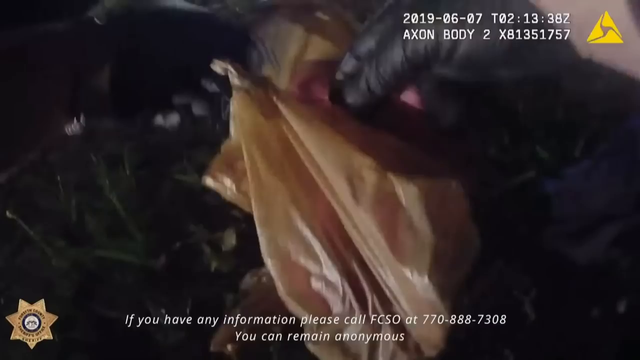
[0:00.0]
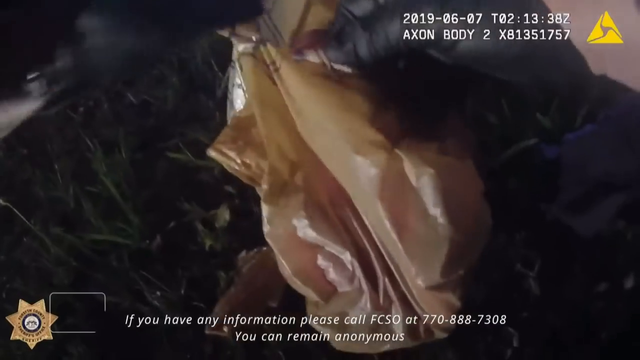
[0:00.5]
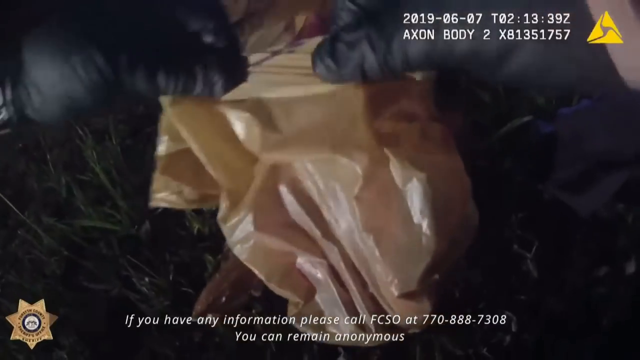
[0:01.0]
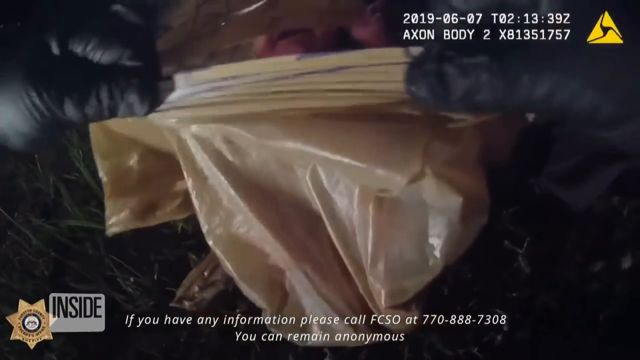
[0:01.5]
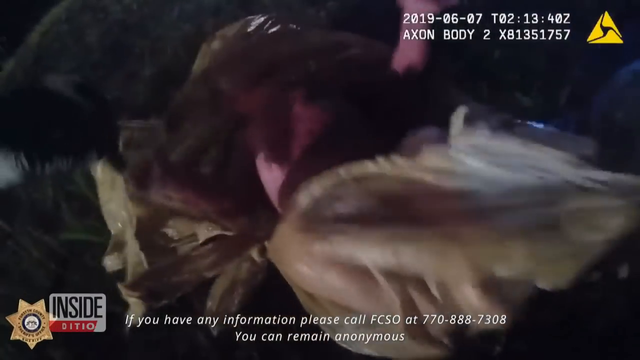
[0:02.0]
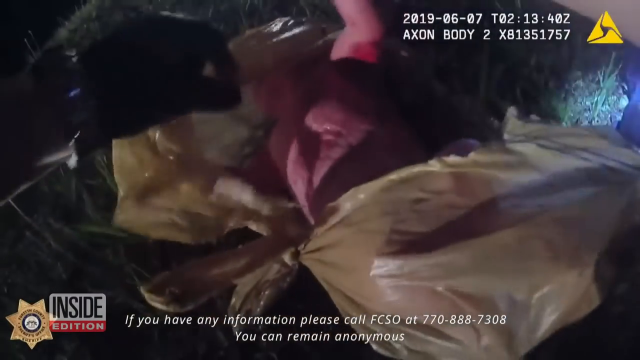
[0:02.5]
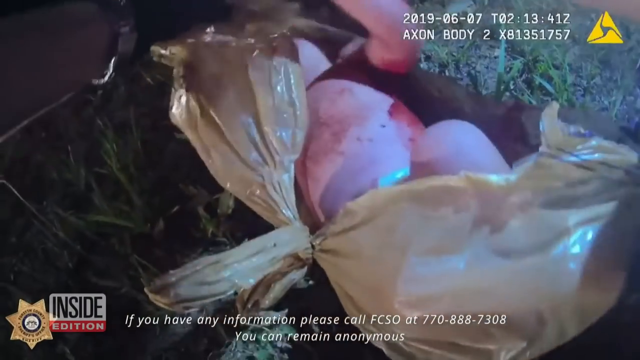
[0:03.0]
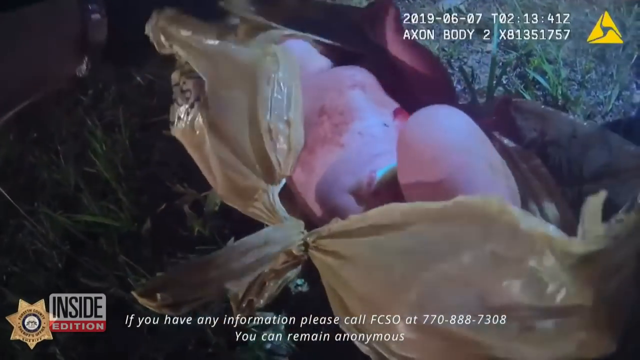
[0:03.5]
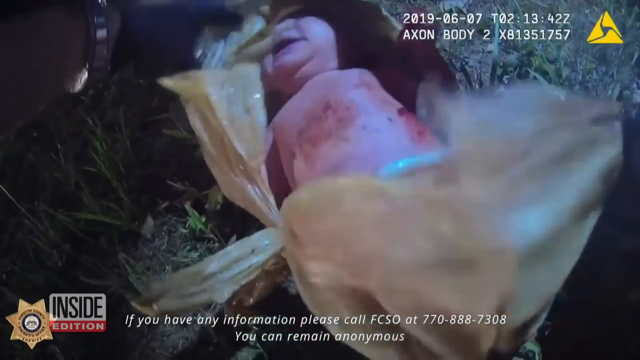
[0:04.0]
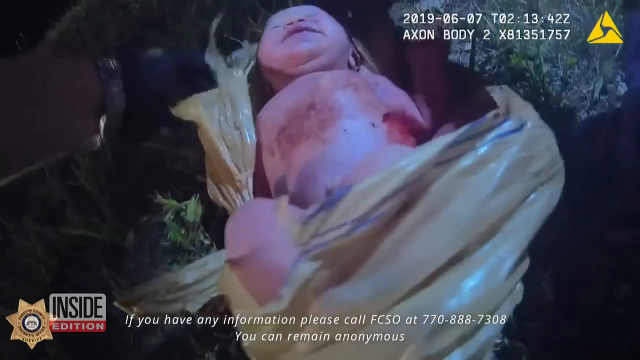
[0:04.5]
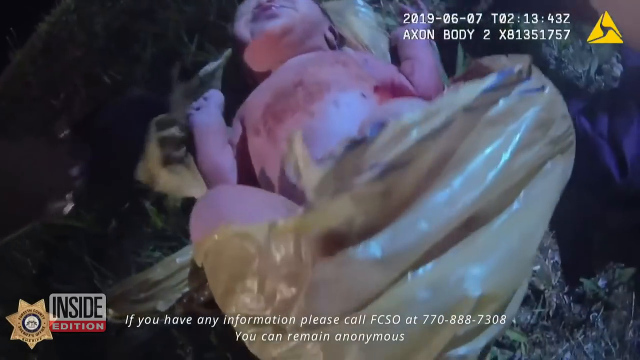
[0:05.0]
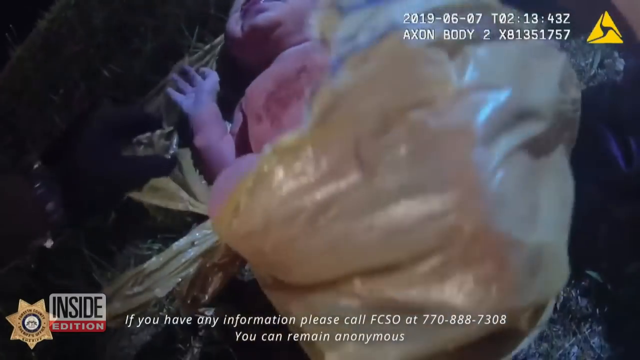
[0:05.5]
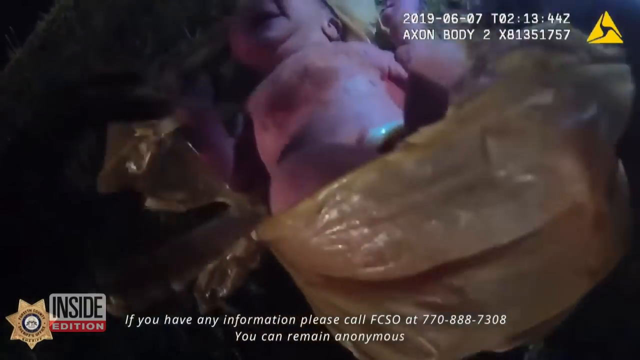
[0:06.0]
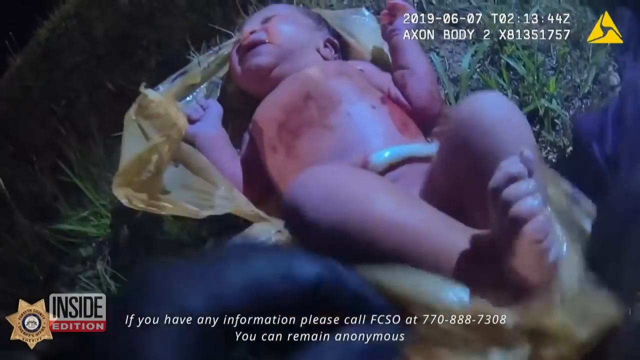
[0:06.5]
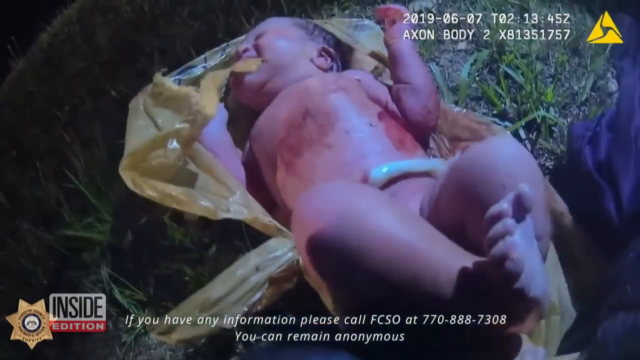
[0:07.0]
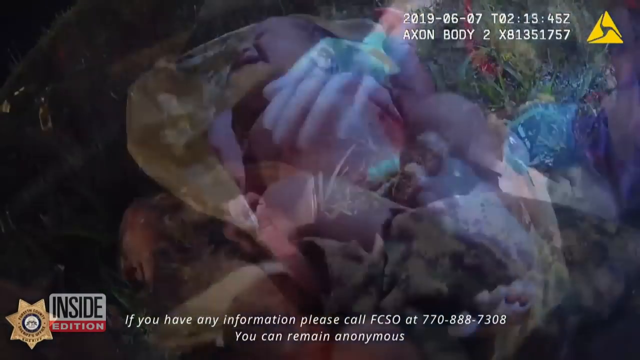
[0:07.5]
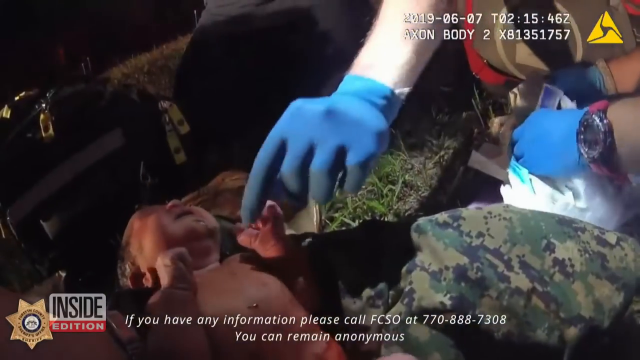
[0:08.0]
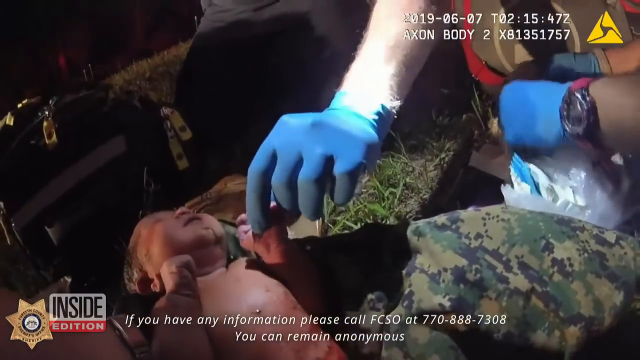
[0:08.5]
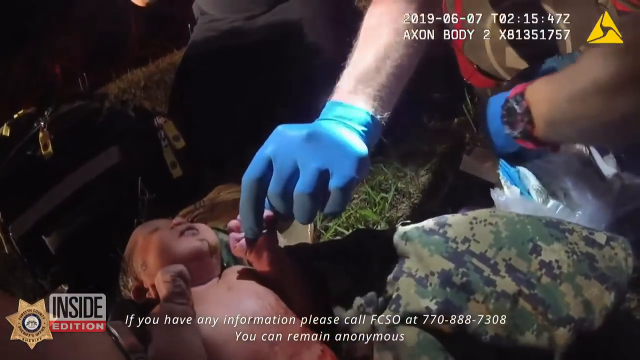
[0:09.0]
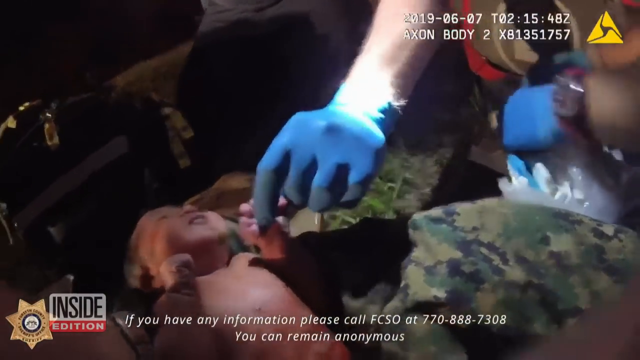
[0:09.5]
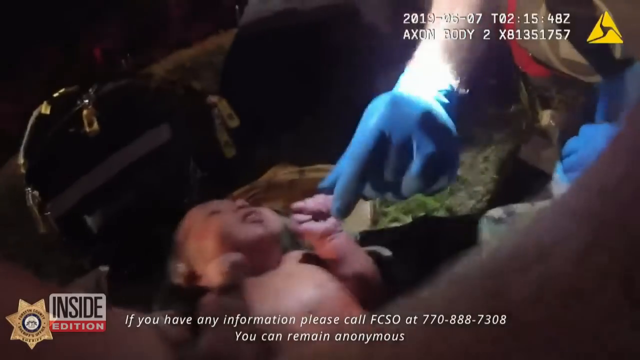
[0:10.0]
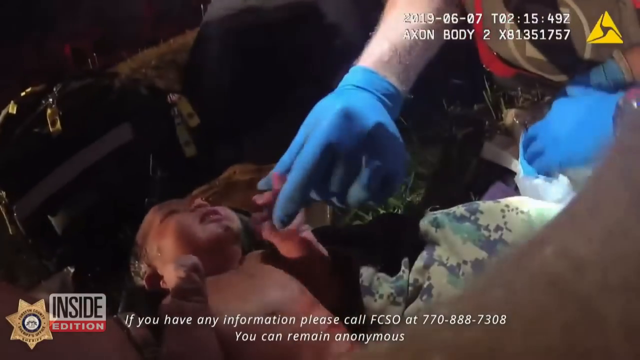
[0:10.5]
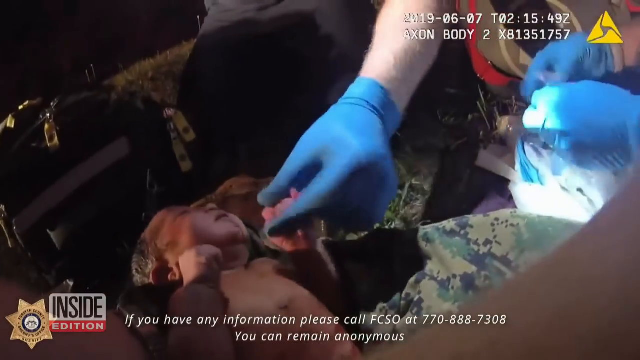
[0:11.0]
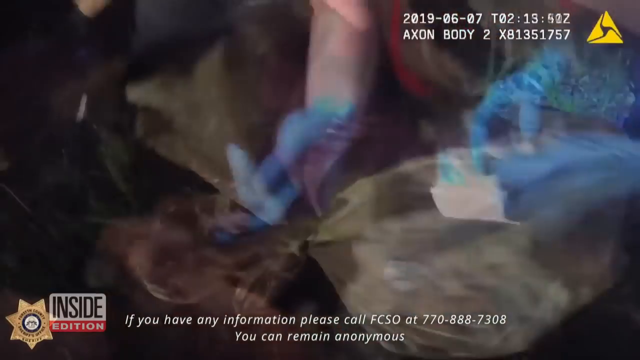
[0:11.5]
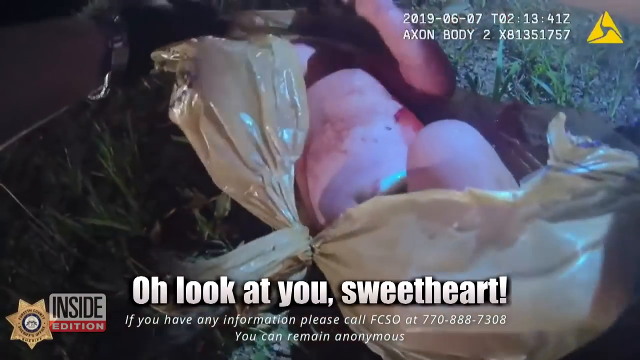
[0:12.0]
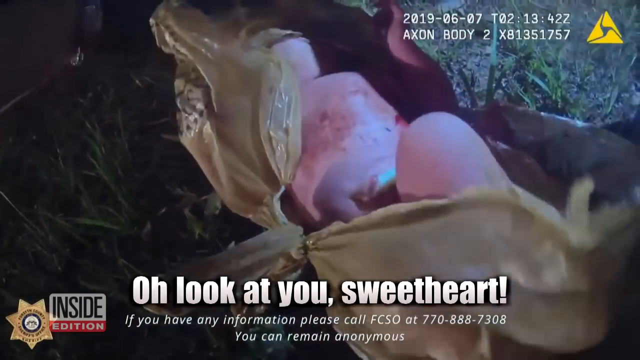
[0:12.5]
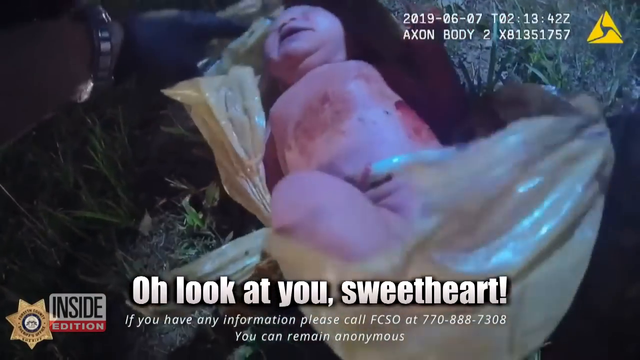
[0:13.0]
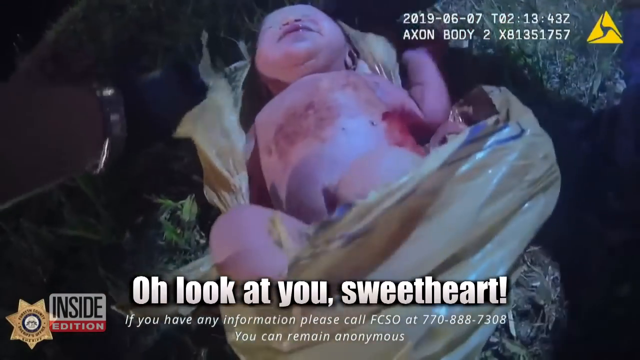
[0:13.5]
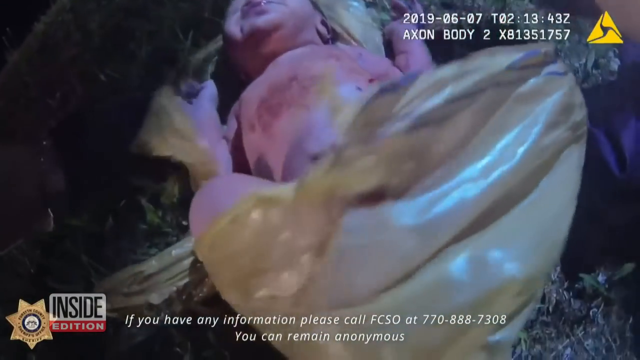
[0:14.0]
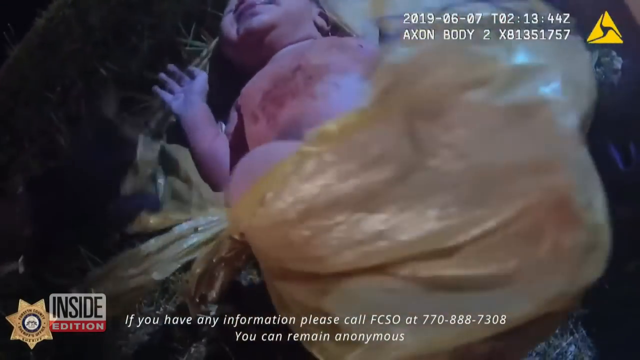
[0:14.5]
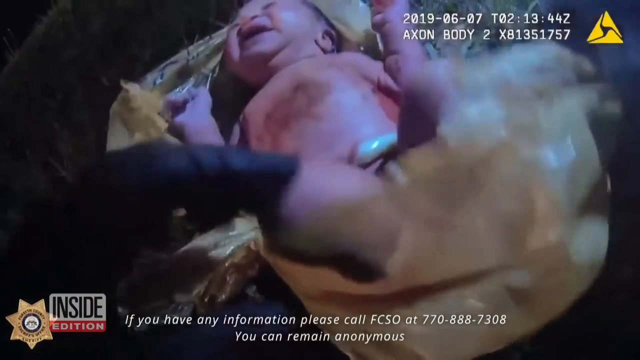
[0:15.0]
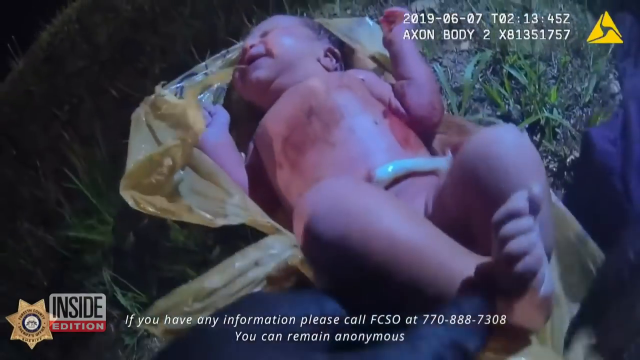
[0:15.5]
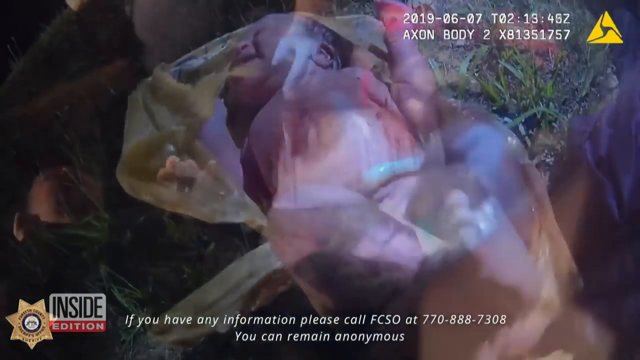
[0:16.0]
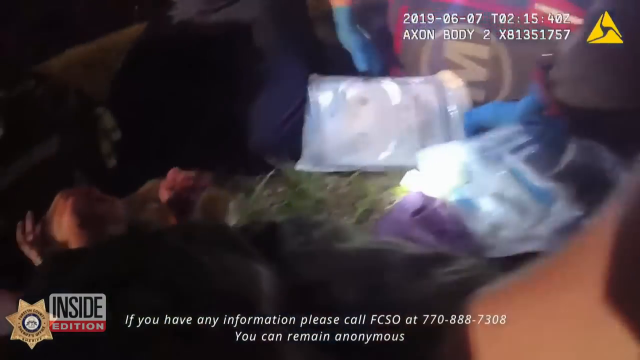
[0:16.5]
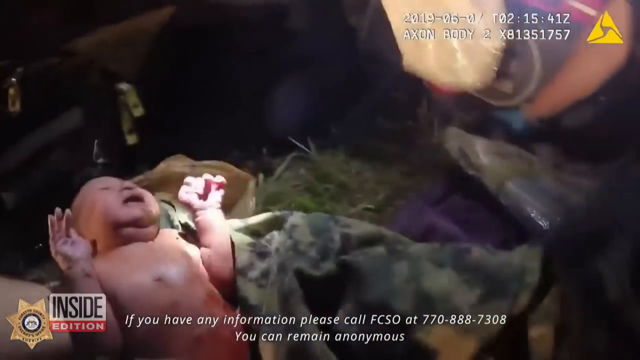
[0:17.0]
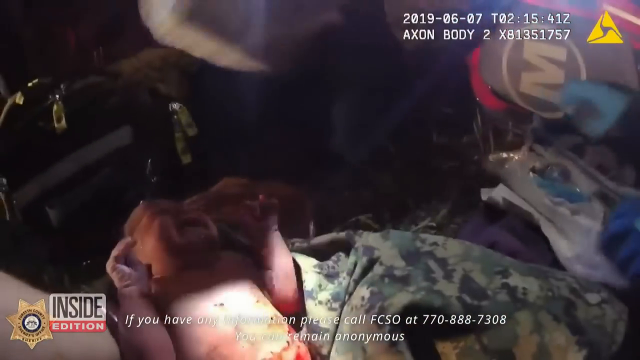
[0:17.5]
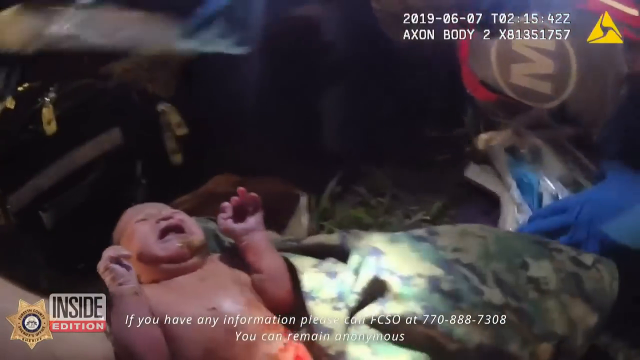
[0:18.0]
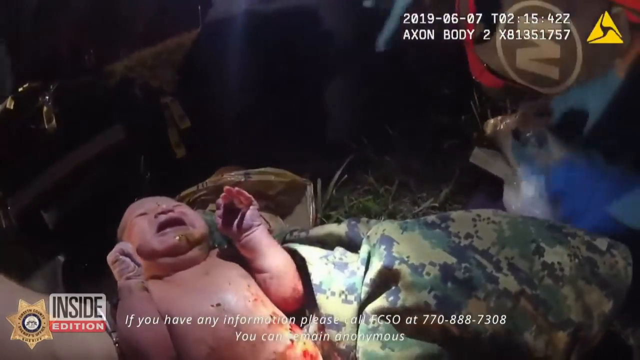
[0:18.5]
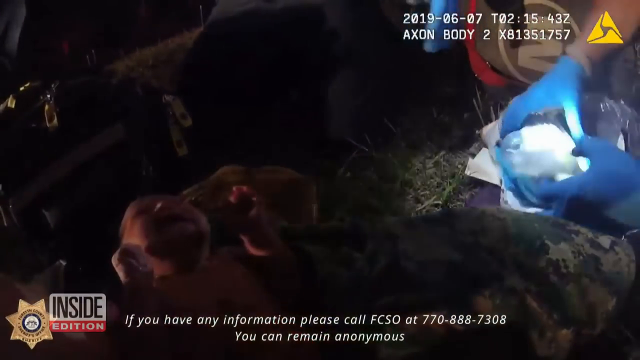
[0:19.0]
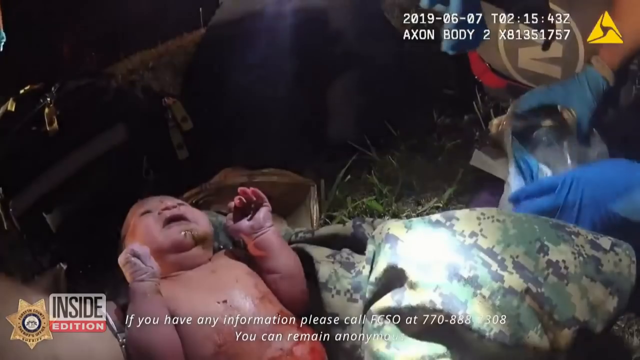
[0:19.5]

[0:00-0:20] At the start, a light brown plastic bag appears, and people rip it open. Inside is a baby, apparently full-term, with wet hair and the umbilical cord still attached. Text at the bottom of the screen reads "well, look at you, sweetheart," presumably words spoken by the personnel who found the baby. Further on-screen text asks anyone with information to please call FCSO and gives a phone number. At least three people attend to the baby, getting it out of the bag and then checking it for any problems. The baby looks like it was just born.